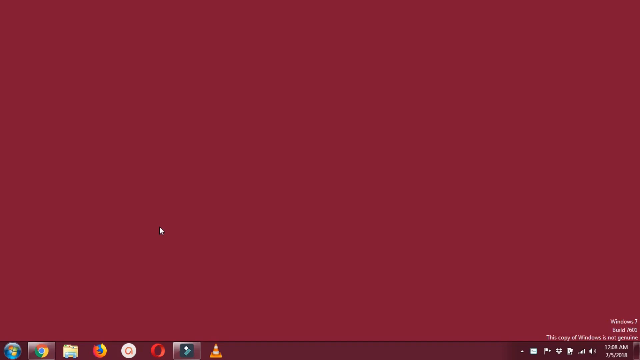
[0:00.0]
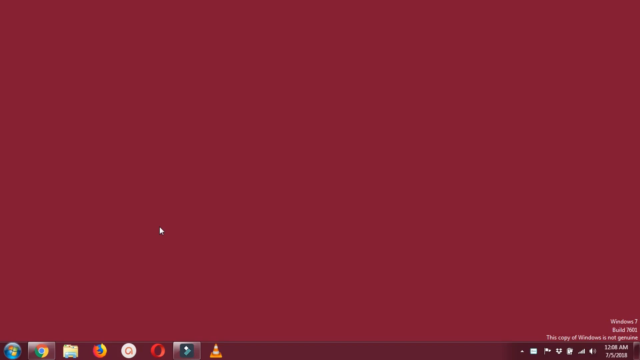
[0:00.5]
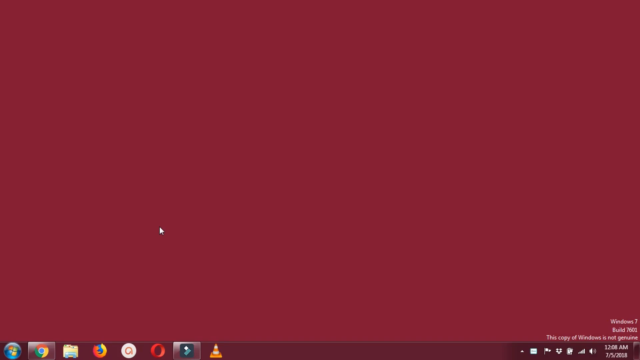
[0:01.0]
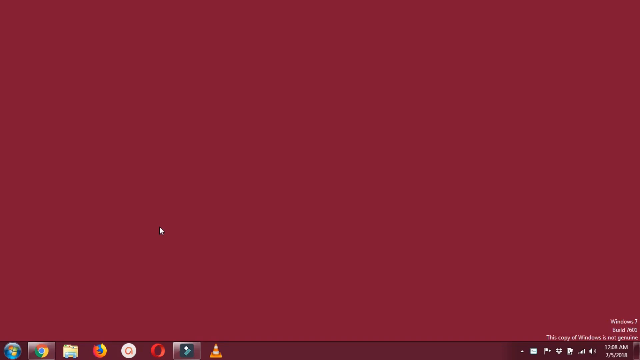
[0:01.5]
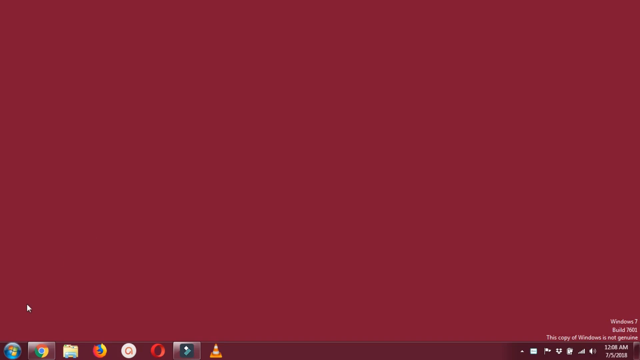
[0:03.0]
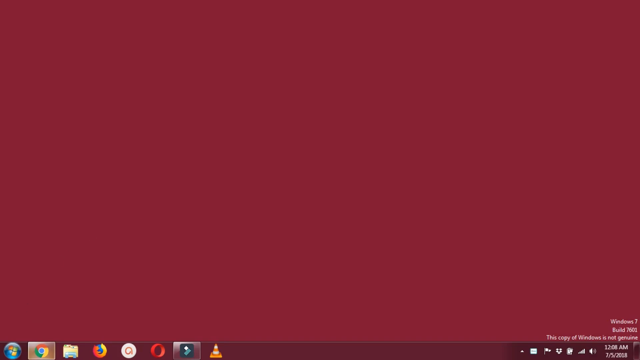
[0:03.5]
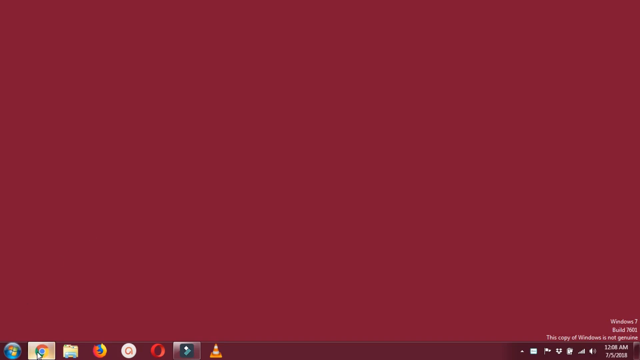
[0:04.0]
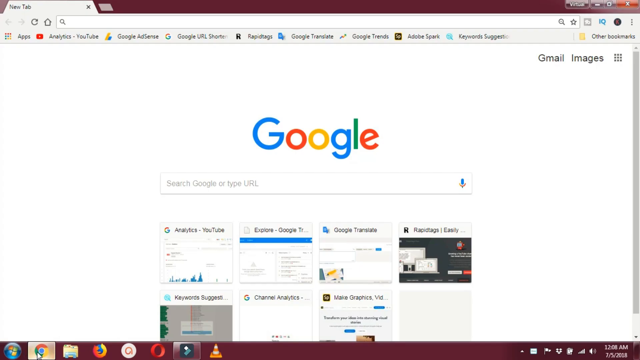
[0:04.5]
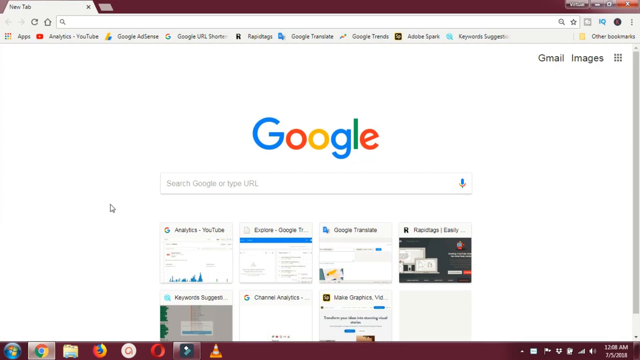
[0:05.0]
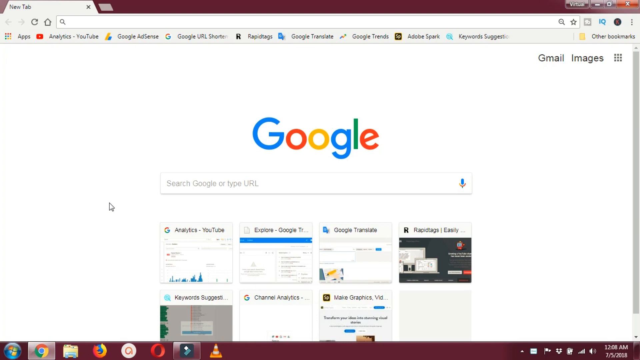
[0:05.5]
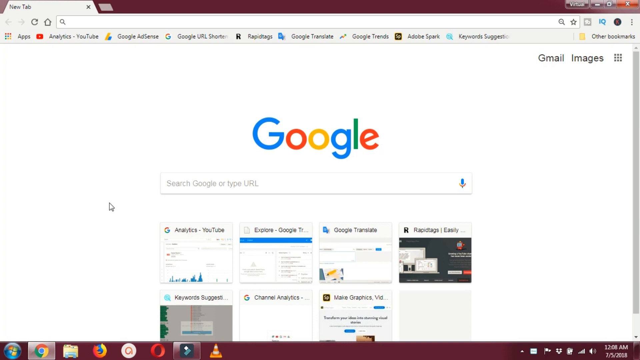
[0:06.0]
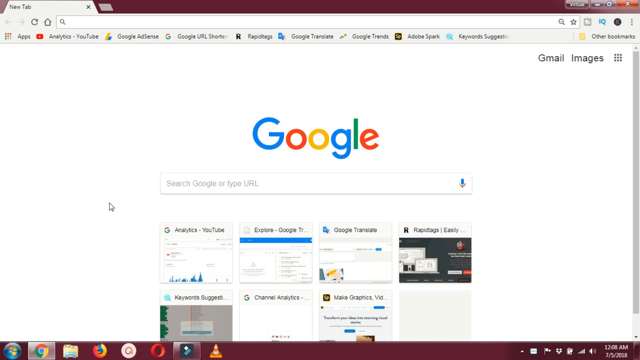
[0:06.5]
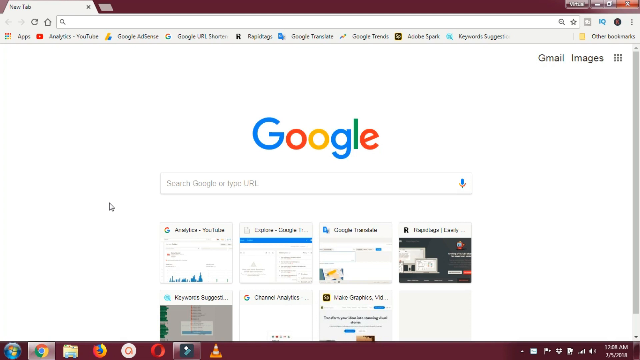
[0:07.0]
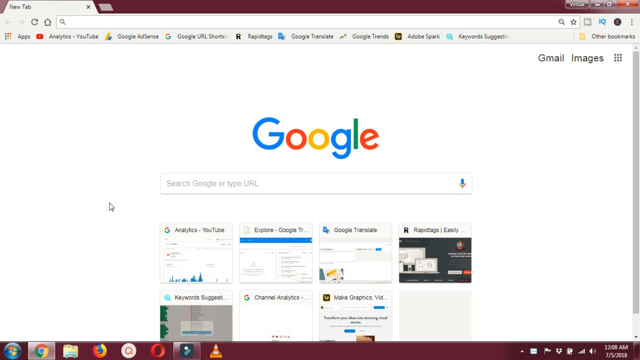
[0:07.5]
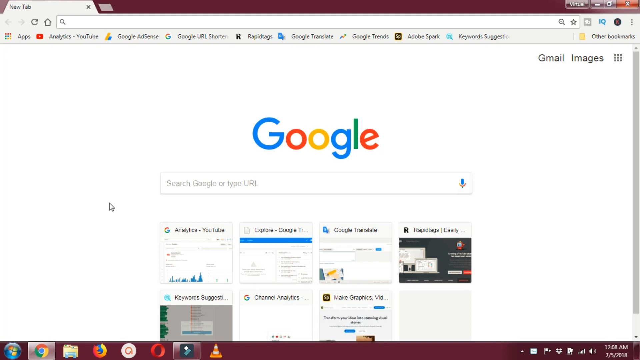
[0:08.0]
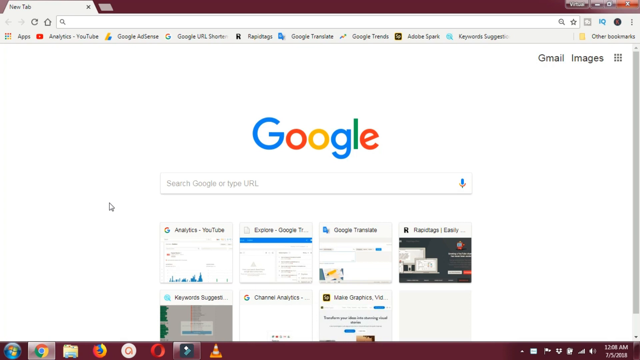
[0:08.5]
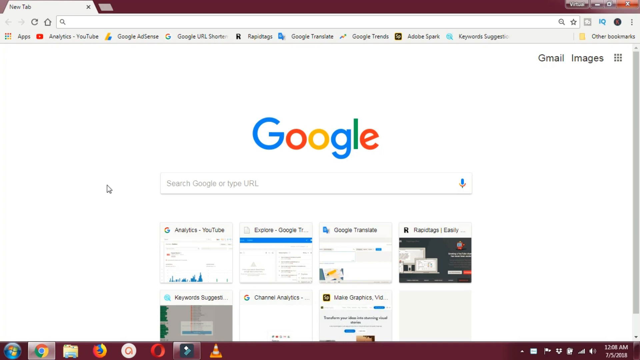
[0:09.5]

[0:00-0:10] On the desktop, Google search is opened and then exited without anything being typed; nothing is searched and nothing is displayed beyond the Google search page. The Google website displays images, but the person navigating does not click on anything.